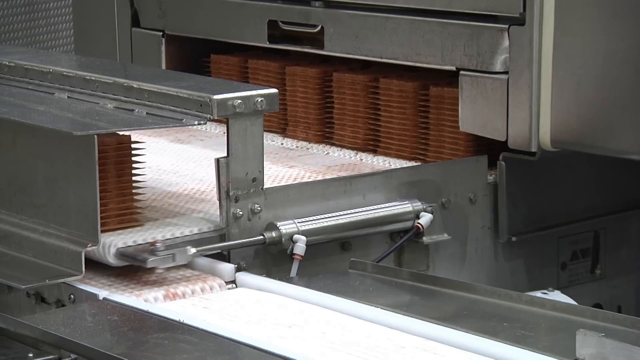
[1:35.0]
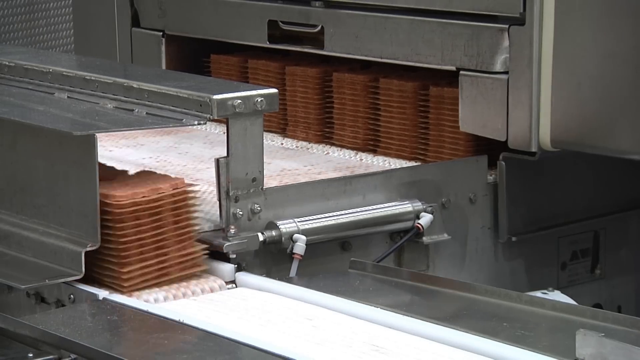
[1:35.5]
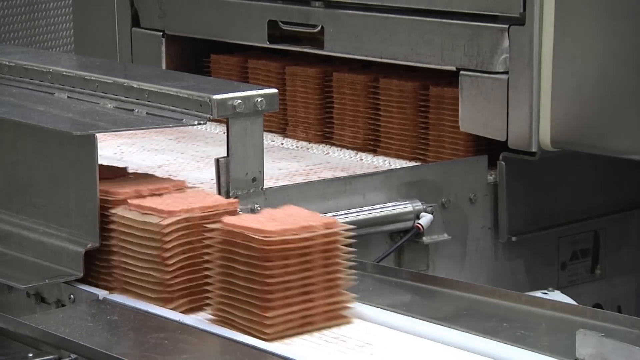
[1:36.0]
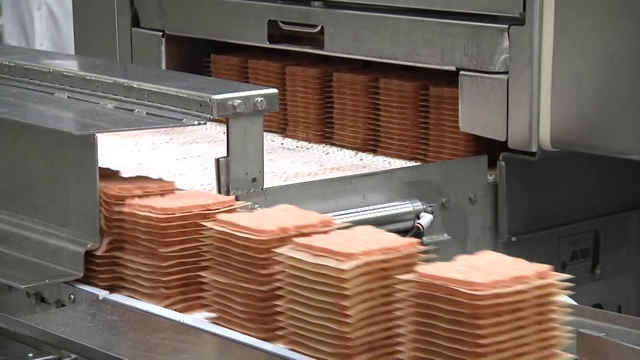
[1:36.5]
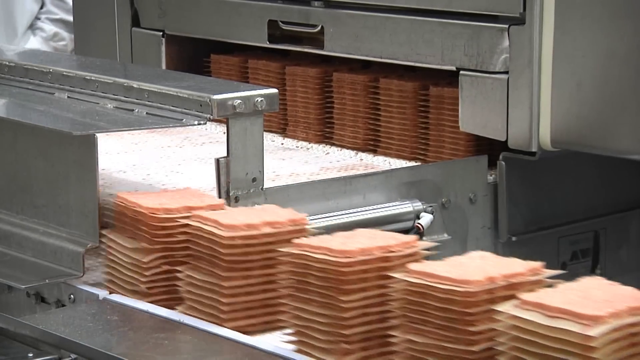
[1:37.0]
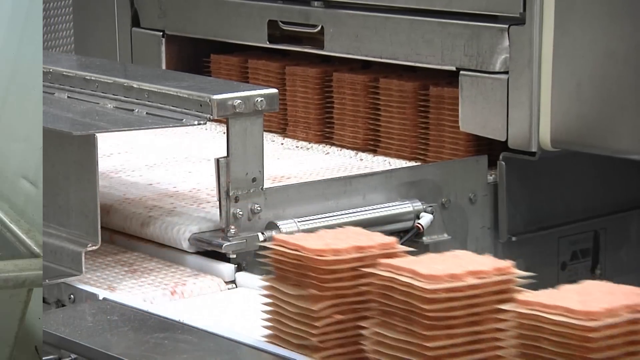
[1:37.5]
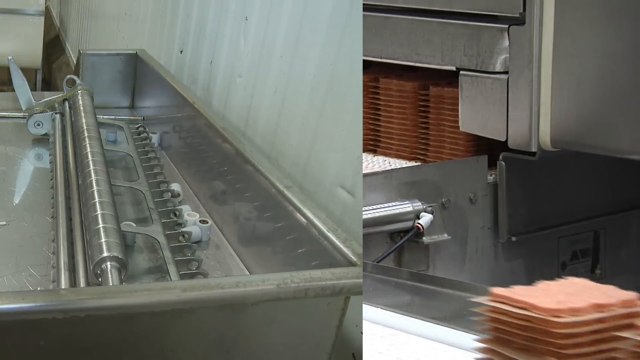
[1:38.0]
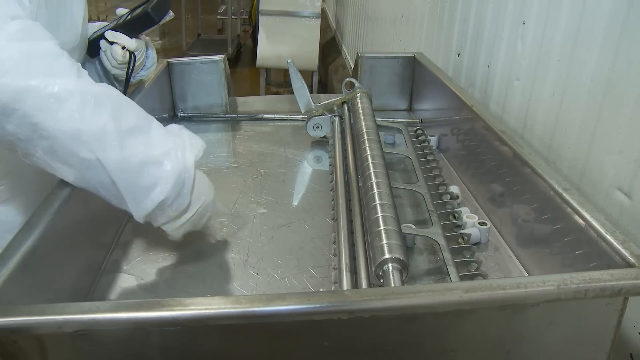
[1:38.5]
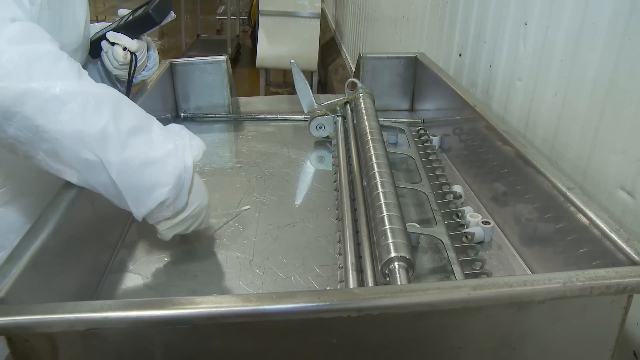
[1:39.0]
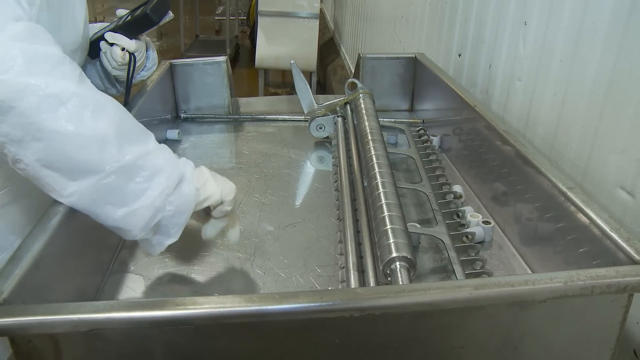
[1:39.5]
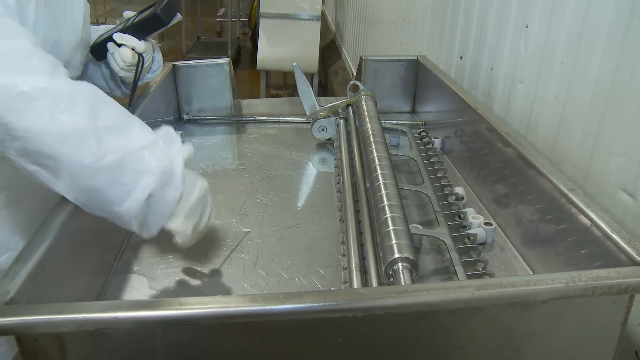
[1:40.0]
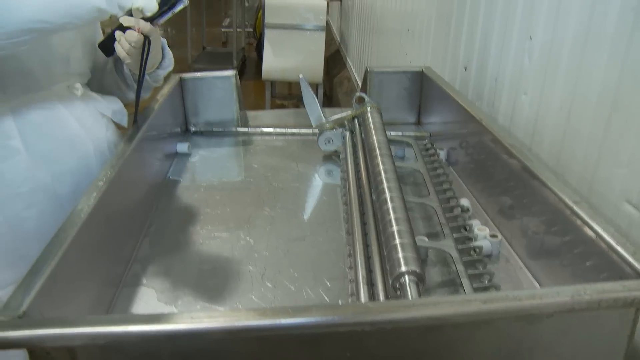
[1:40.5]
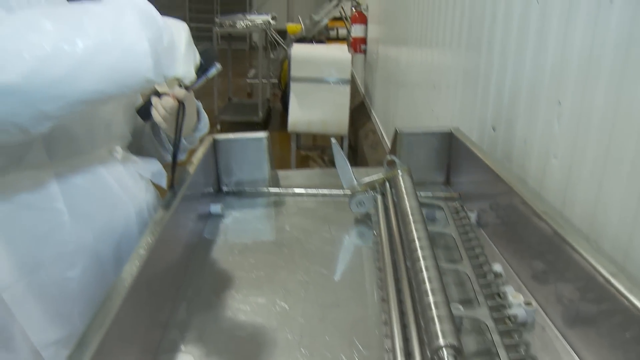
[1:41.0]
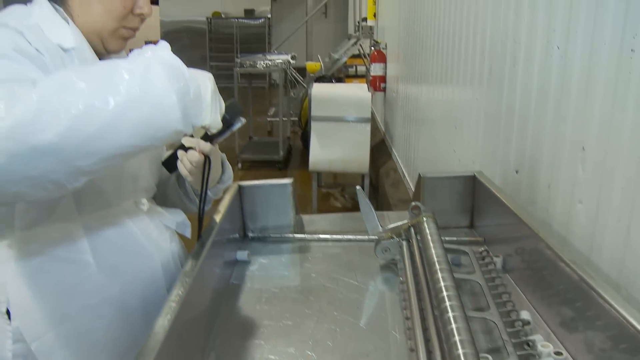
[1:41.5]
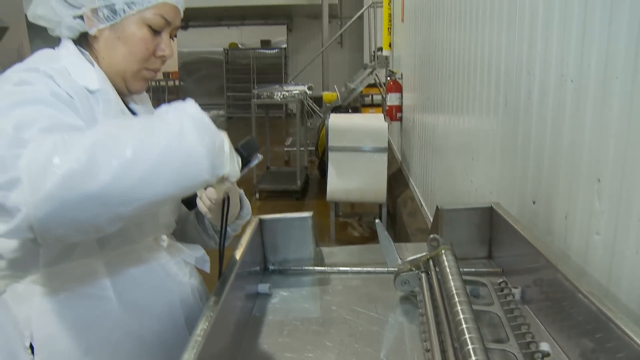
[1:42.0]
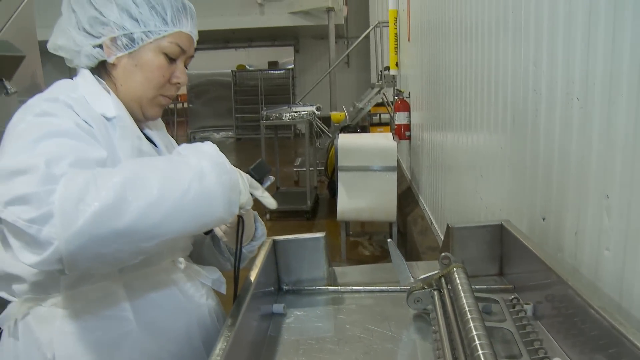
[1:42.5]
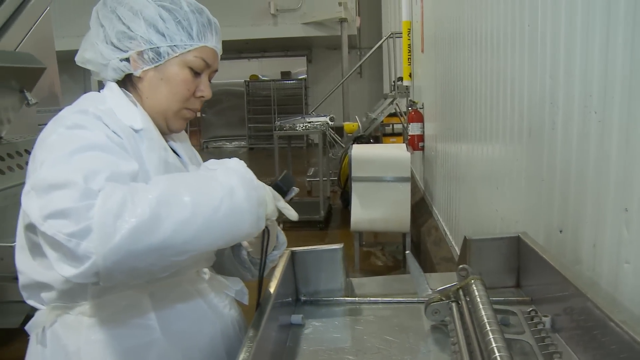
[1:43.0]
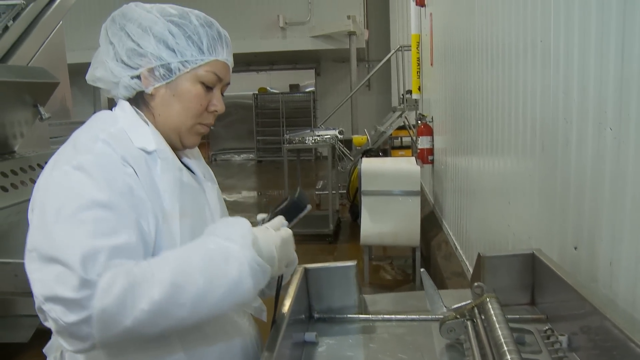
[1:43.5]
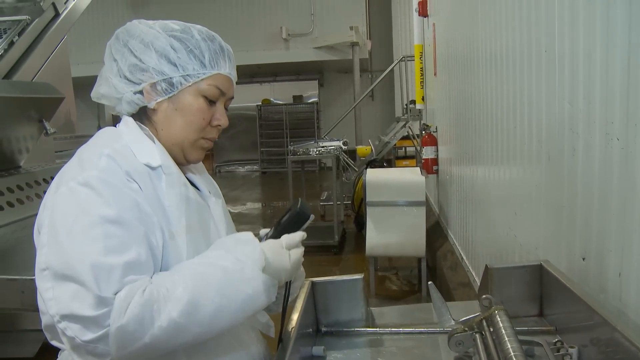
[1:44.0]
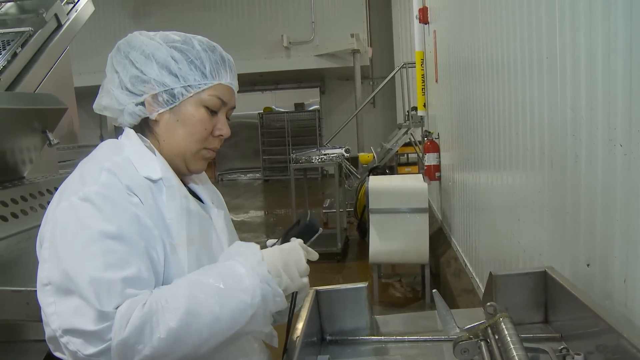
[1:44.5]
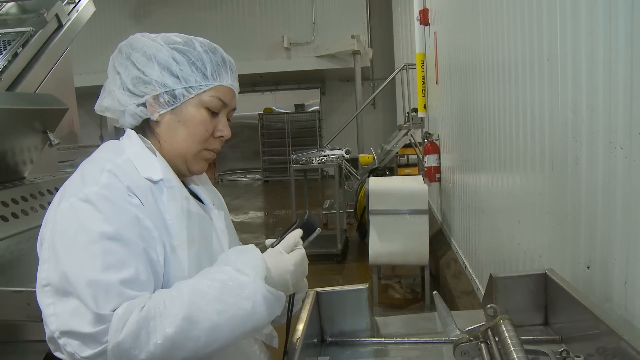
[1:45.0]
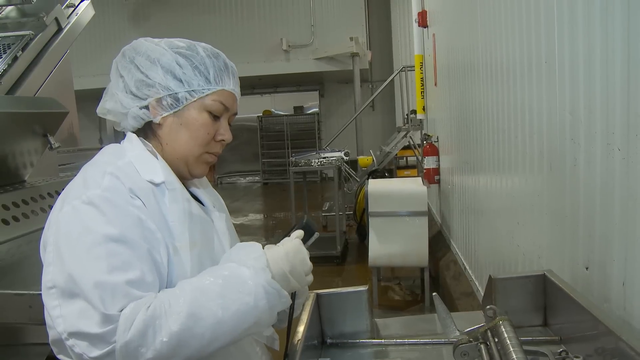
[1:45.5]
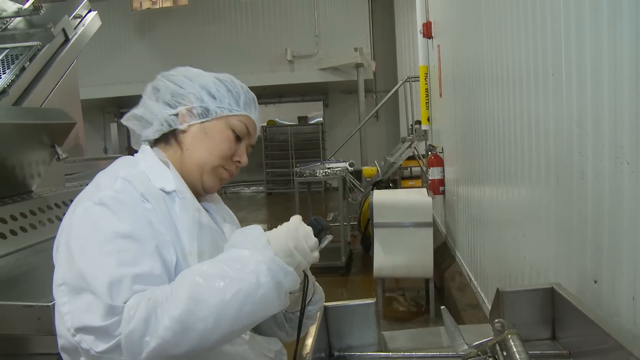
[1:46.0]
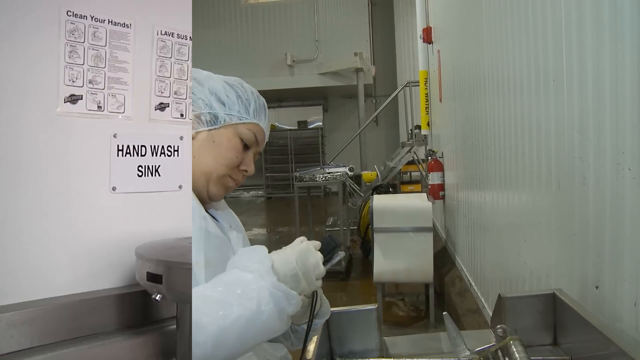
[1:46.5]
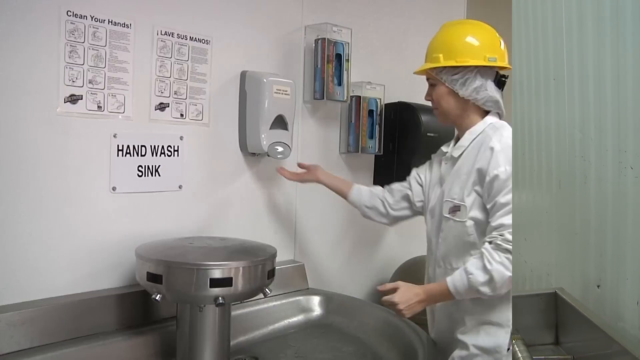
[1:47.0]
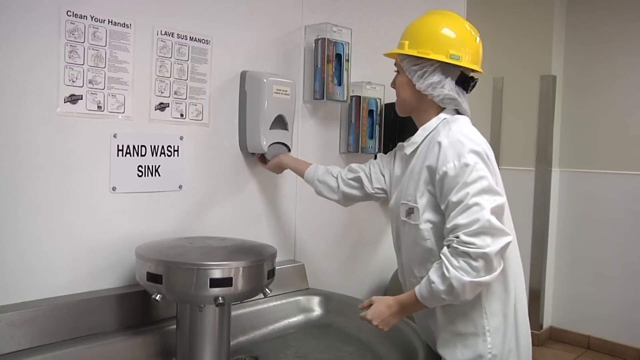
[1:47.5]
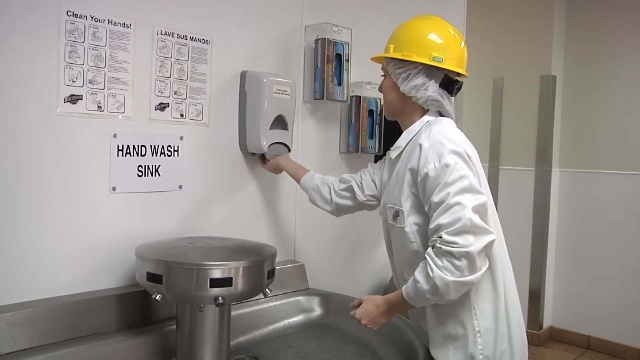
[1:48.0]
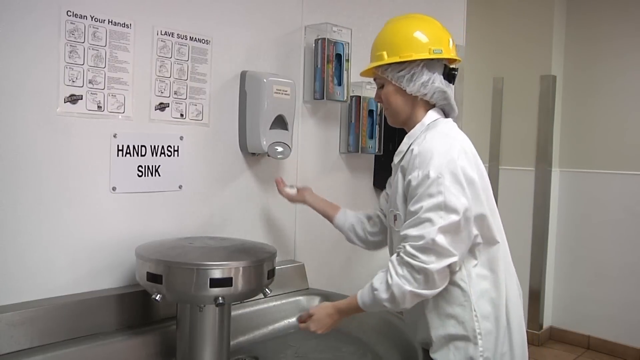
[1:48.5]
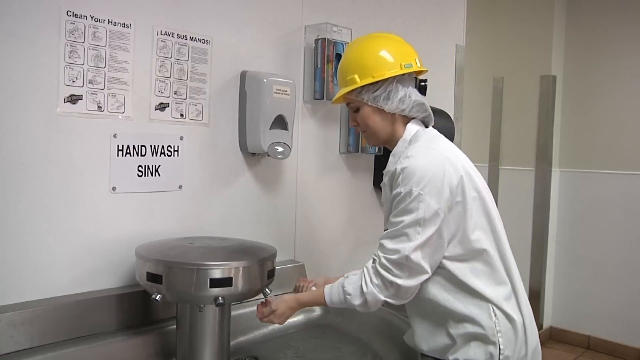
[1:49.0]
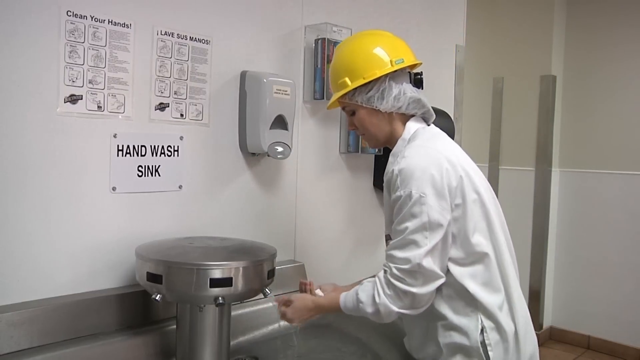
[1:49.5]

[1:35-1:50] Pressed or frozen square patties appear to come out from being pressed together and are stacked on top of one another, moving to another line or part of the process, possibly for packing. Sanitary practices are then shown: somebody scrubs a surface, or maybe she is taking a sample of the surface, and then a woman washes her hands.